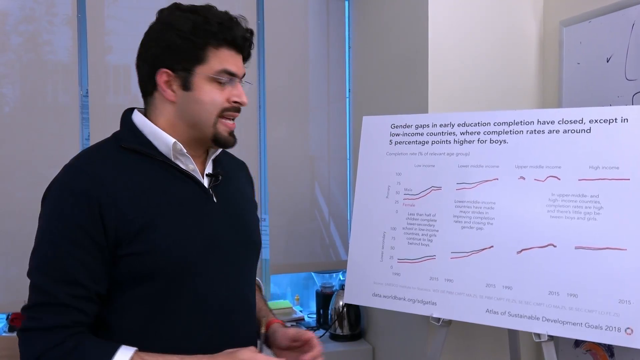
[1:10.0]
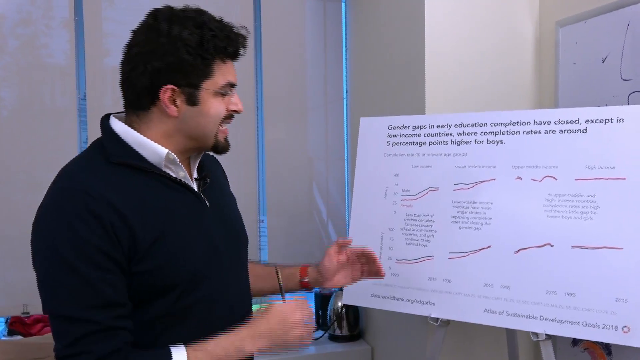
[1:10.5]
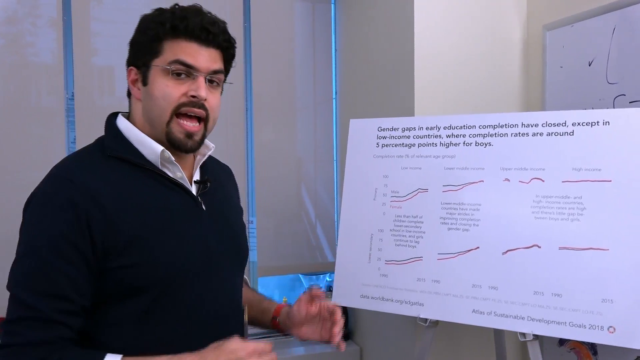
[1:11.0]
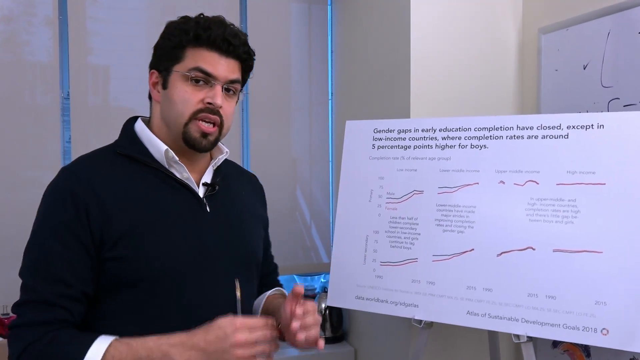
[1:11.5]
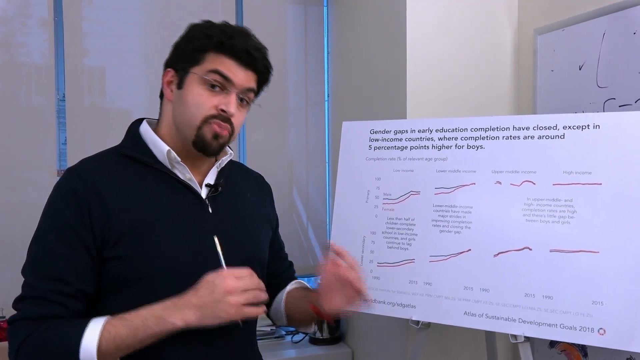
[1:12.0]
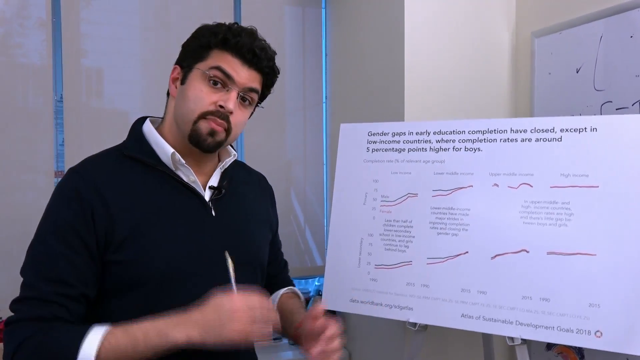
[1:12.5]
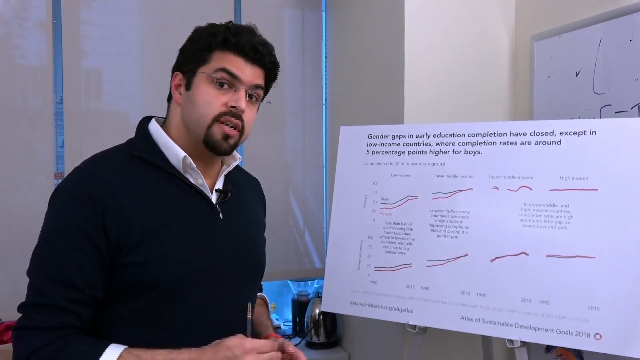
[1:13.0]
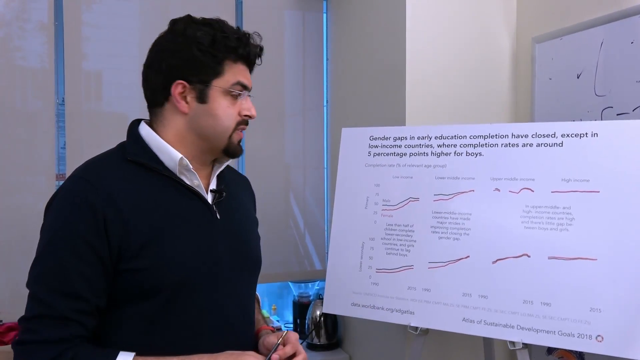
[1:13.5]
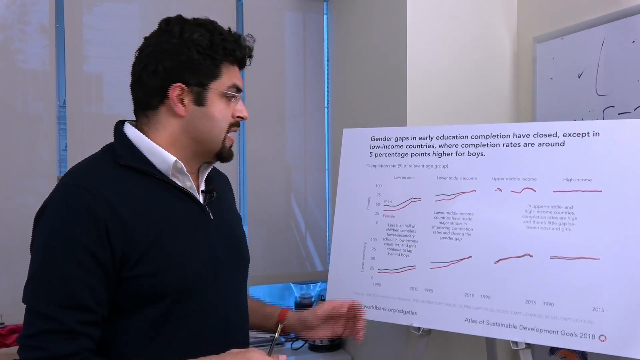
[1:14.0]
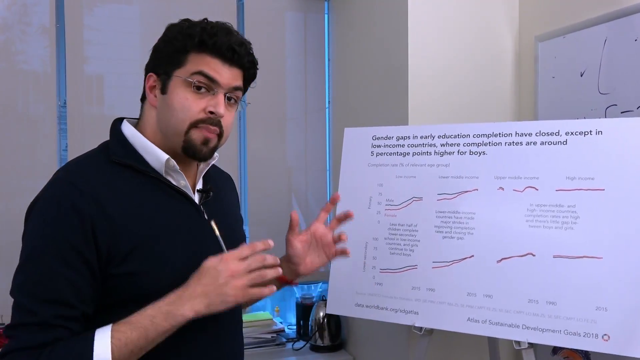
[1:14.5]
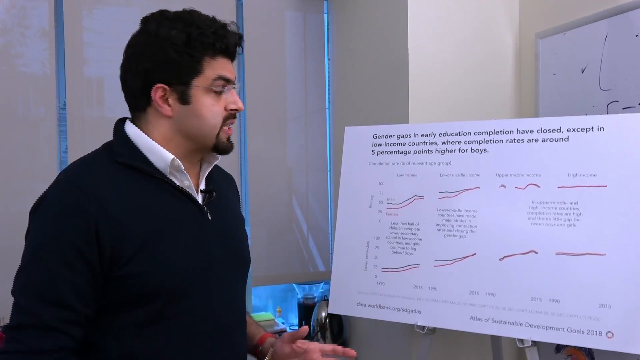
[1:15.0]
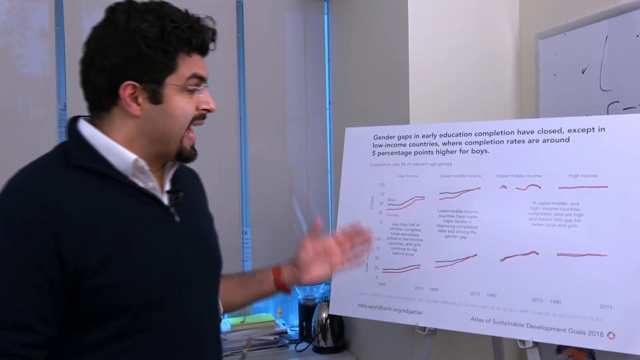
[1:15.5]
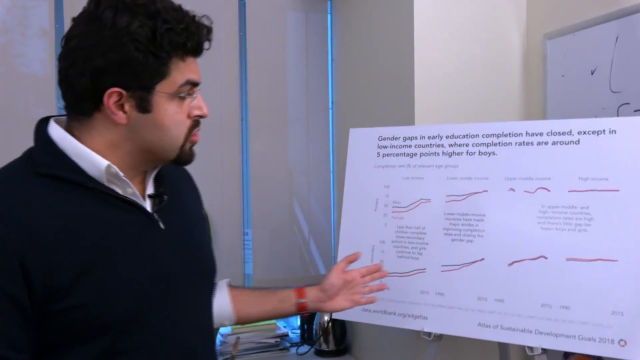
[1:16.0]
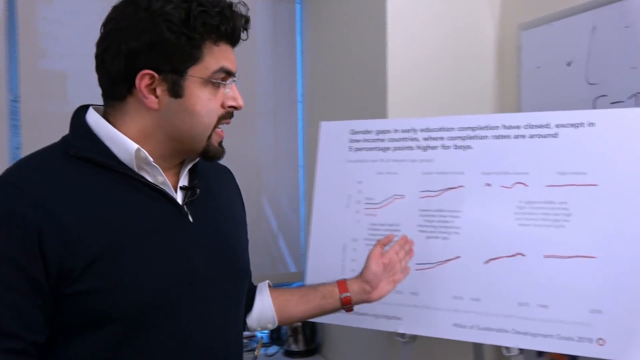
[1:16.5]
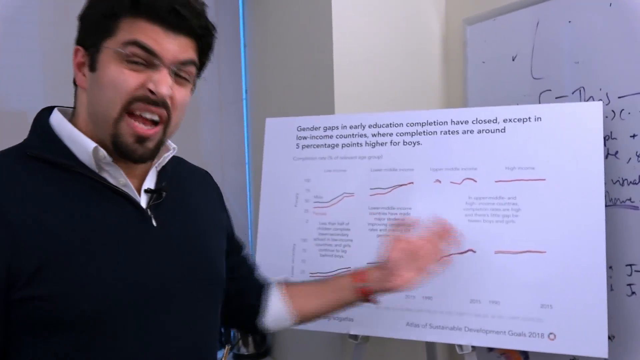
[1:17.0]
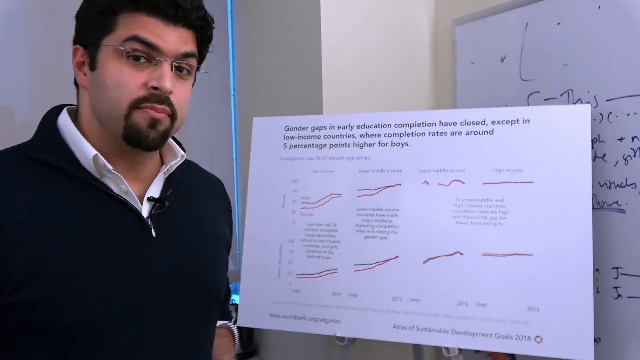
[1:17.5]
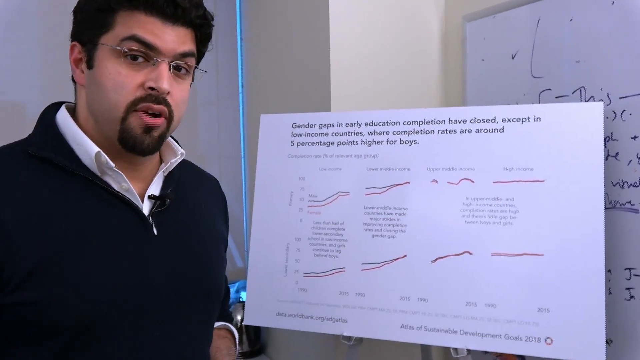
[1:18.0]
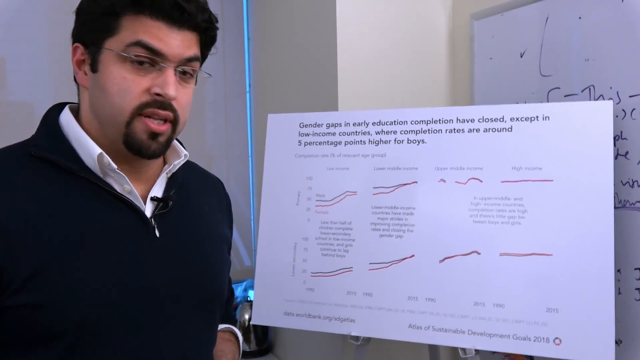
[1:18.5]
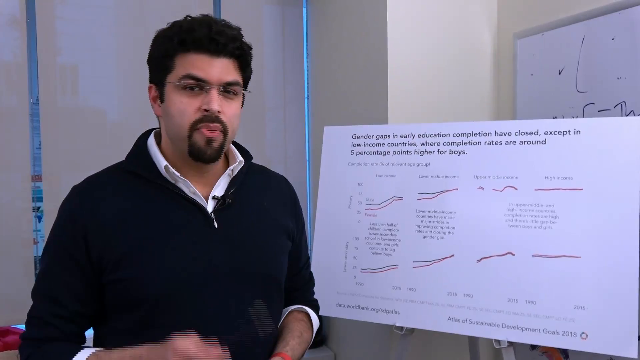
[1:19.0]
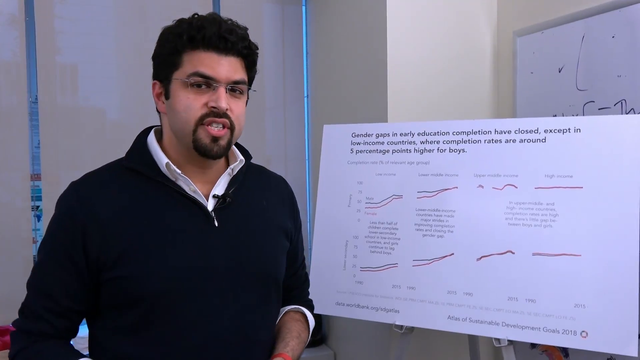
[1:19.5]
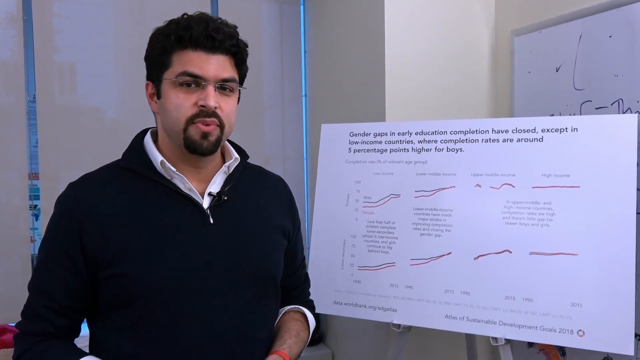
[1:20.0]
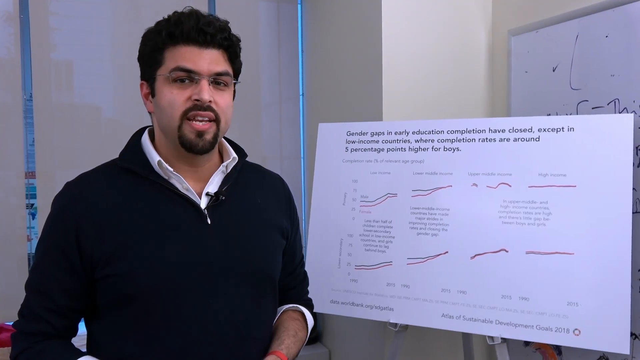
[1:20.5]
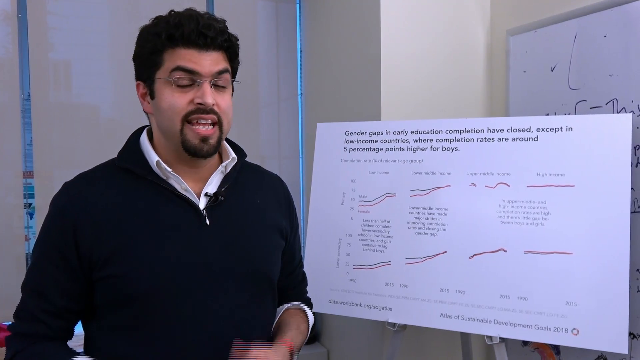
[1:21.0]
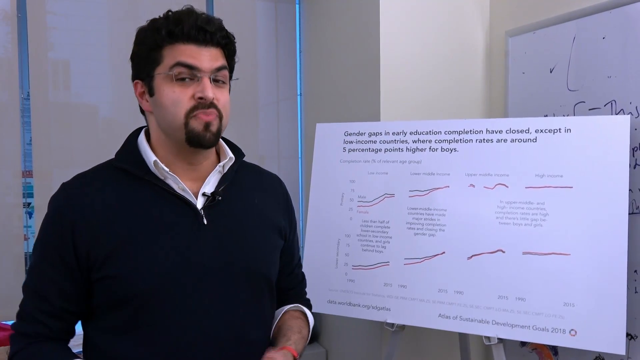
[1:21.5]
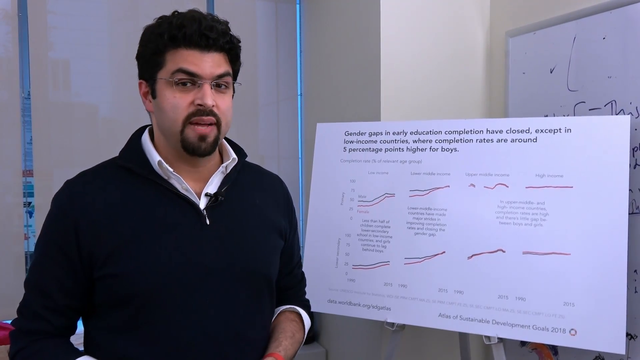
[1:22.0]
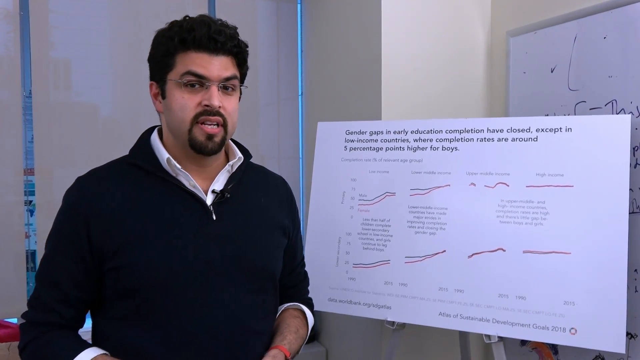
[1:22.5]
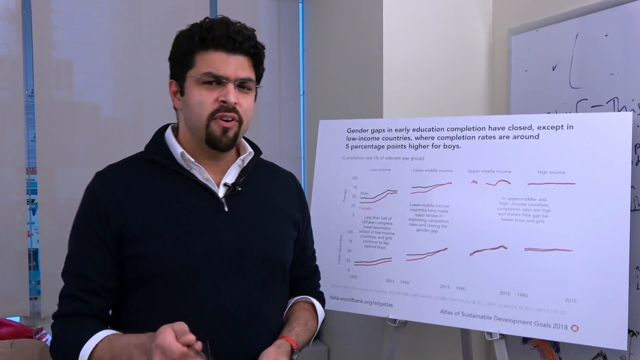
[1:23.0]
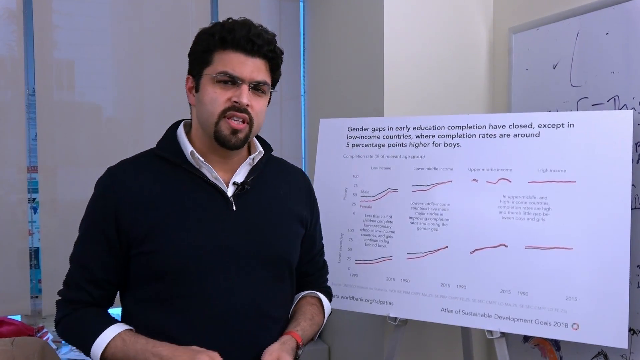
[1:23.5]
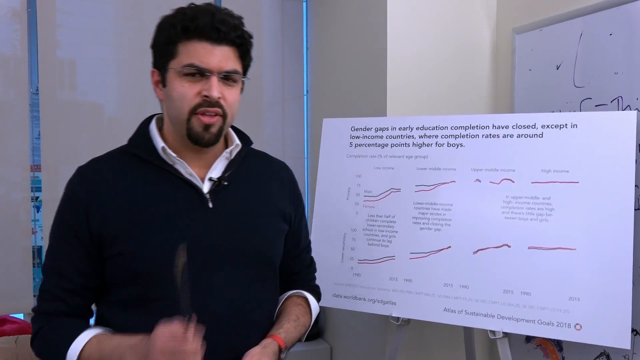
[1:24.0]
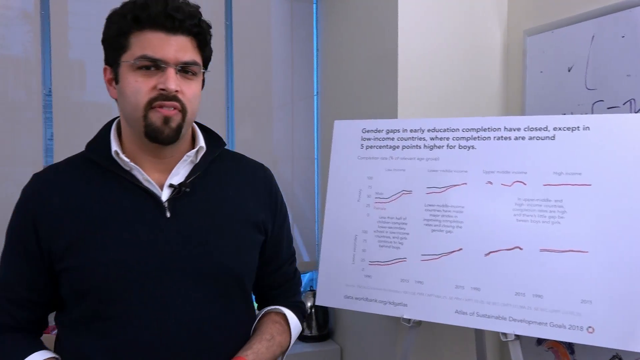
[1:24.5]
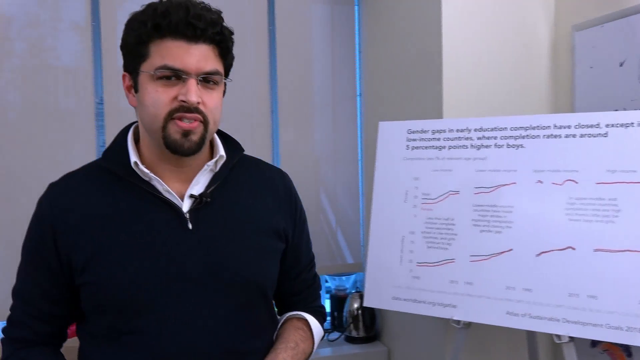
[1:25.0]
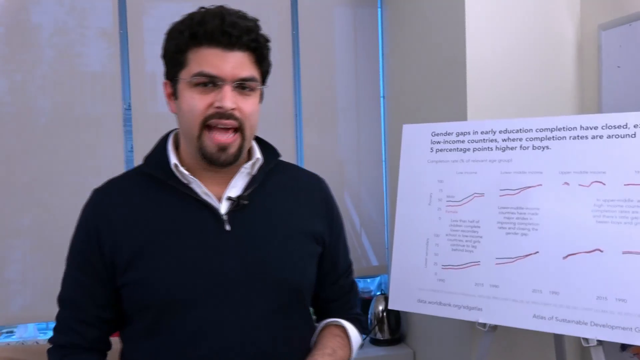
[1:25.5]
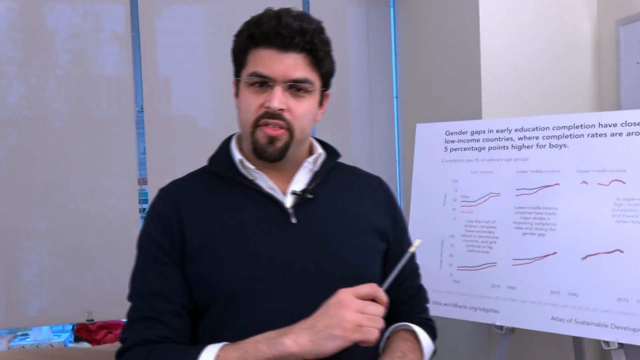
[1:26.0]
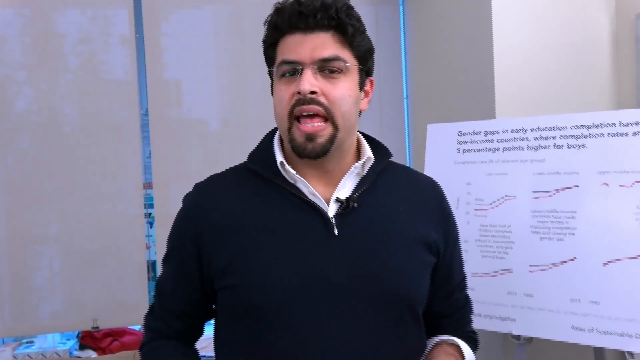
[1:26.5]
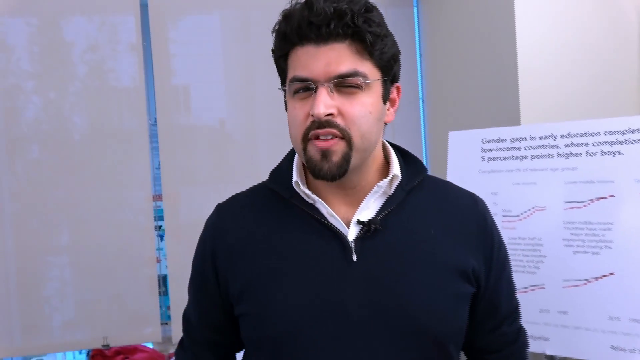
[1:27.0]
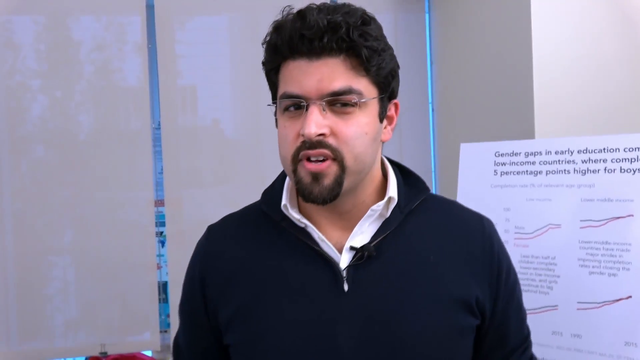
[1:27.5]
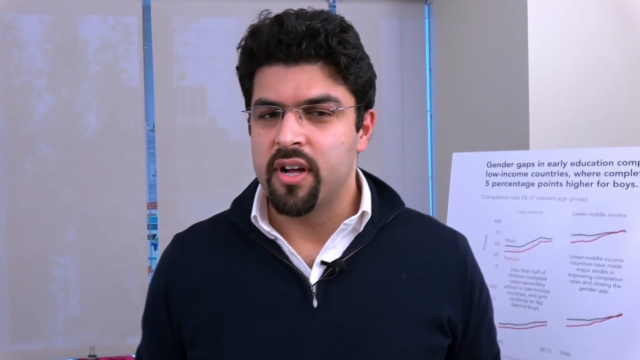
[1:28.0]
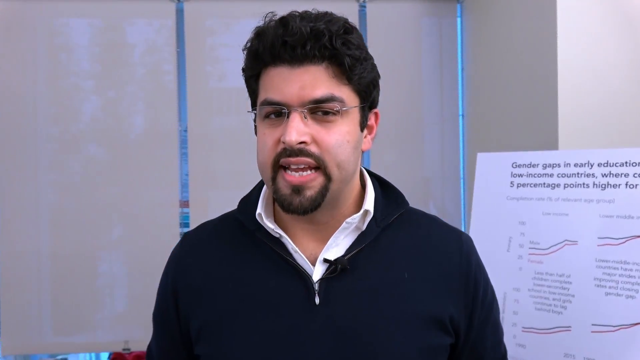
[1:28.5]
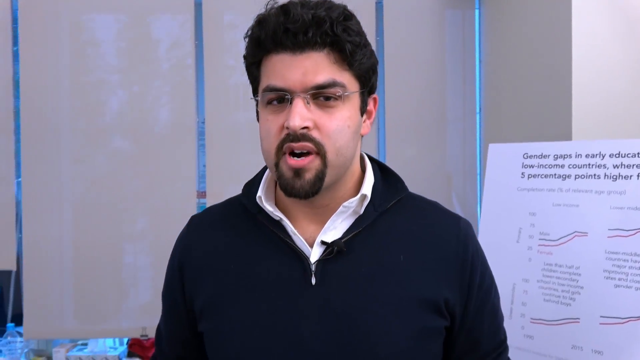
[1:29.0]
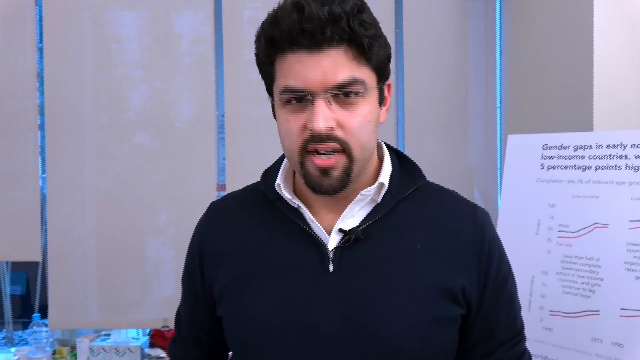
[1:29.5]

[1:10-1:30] The man stands at the paper easel, going through each of its four columns and explaining them to the camera. He looks straight into the camera at times and at other times at the paper he is about to read from. His gestures keep changing, and he appears subtly animated. The writing on the easel cannot be read. He keeps looking back and forth, and at times the camera moves abruptly.